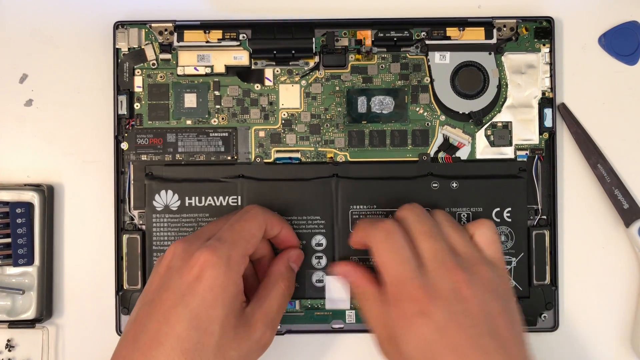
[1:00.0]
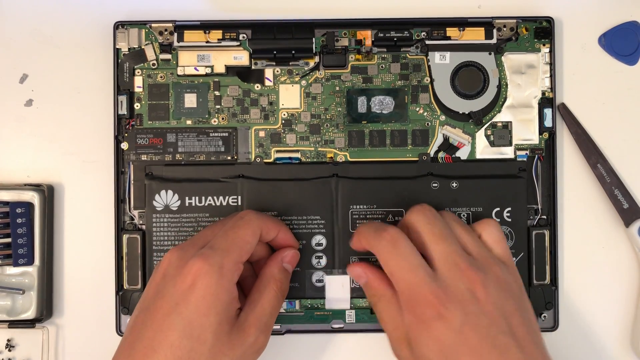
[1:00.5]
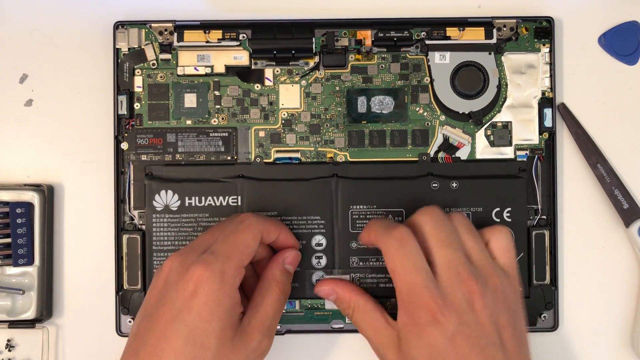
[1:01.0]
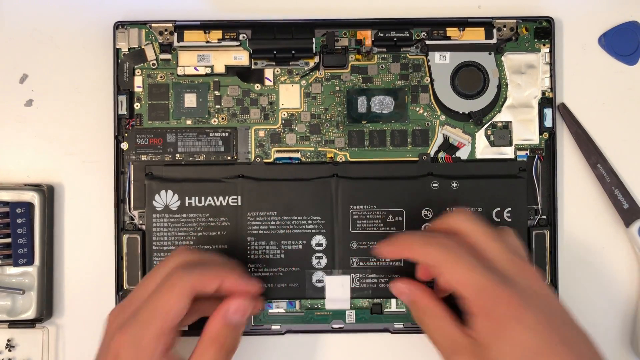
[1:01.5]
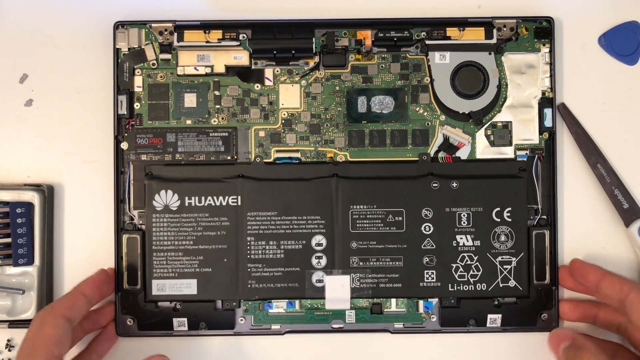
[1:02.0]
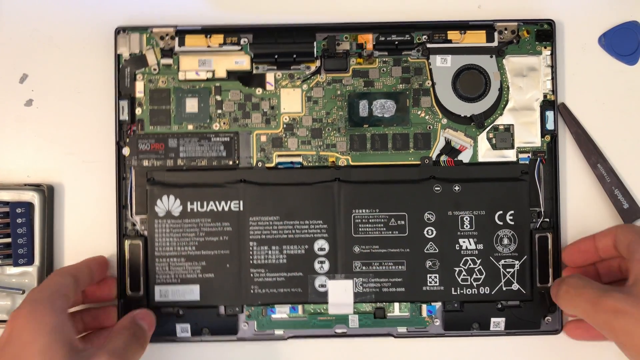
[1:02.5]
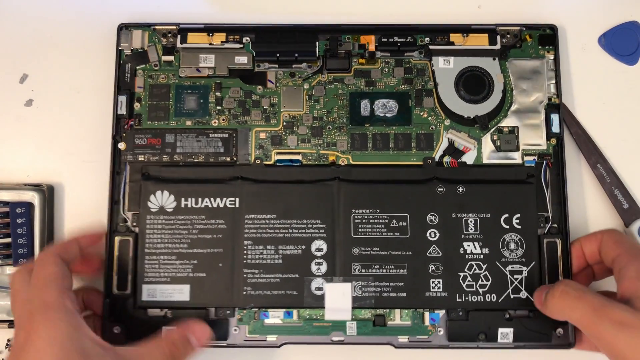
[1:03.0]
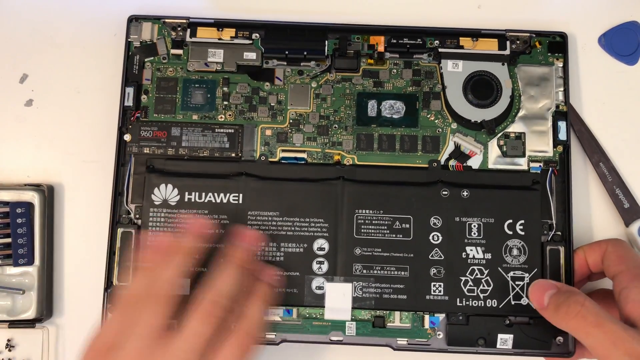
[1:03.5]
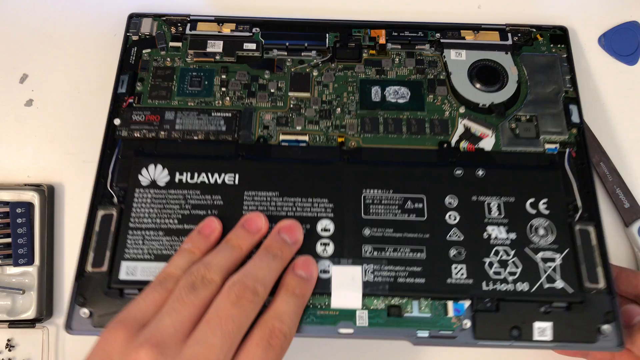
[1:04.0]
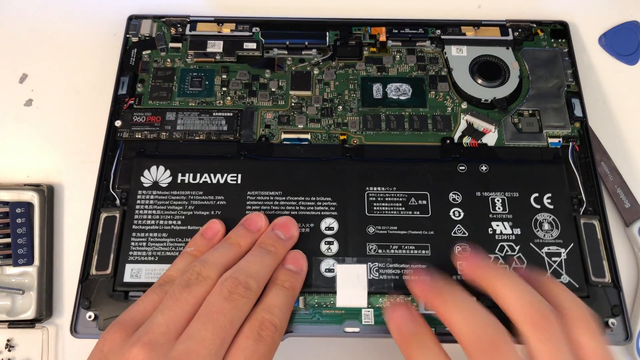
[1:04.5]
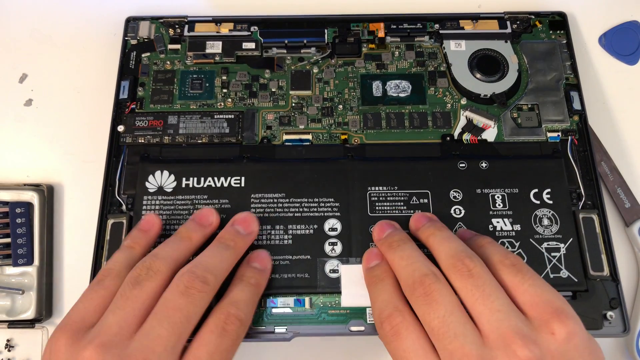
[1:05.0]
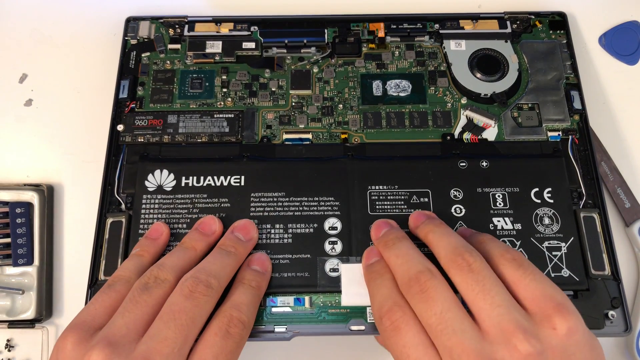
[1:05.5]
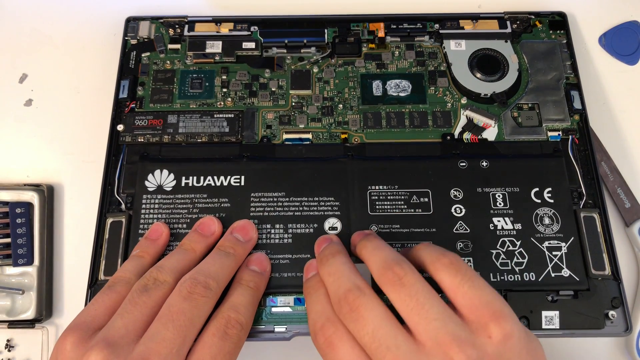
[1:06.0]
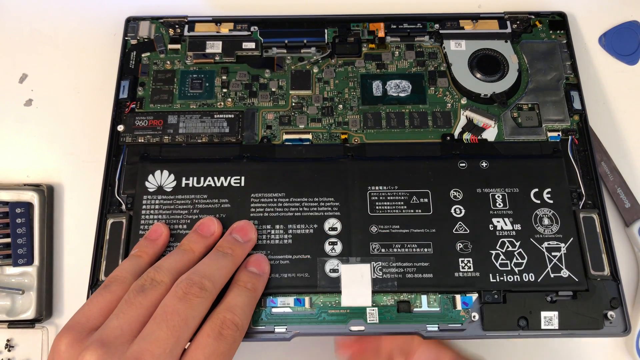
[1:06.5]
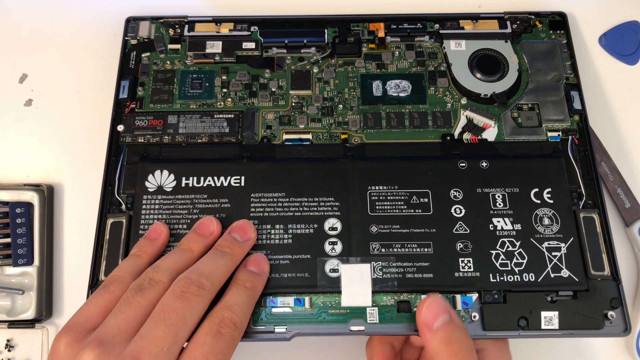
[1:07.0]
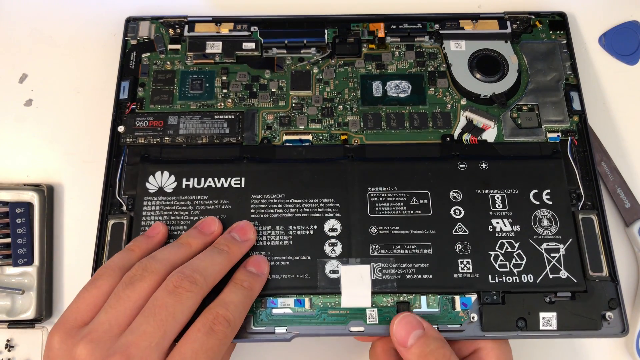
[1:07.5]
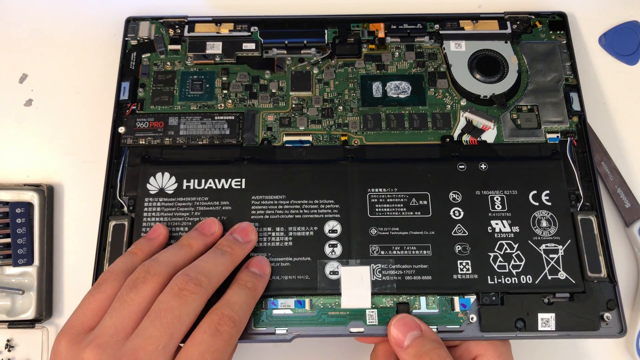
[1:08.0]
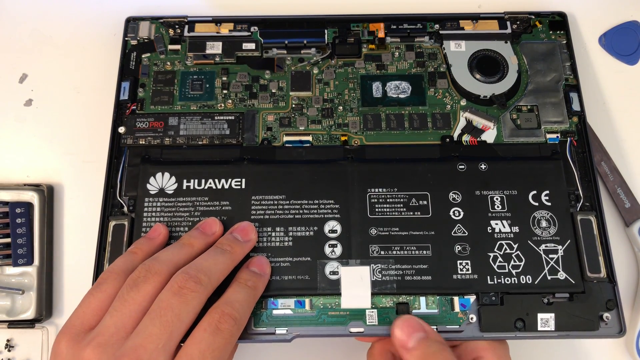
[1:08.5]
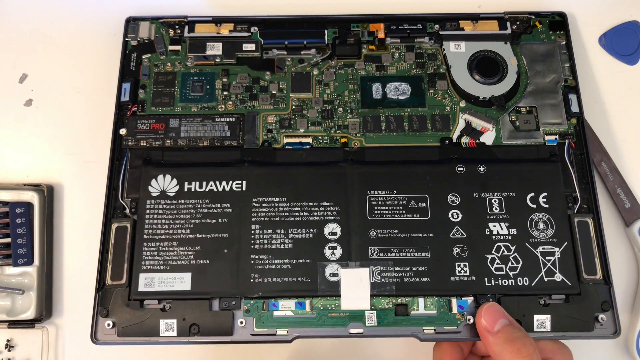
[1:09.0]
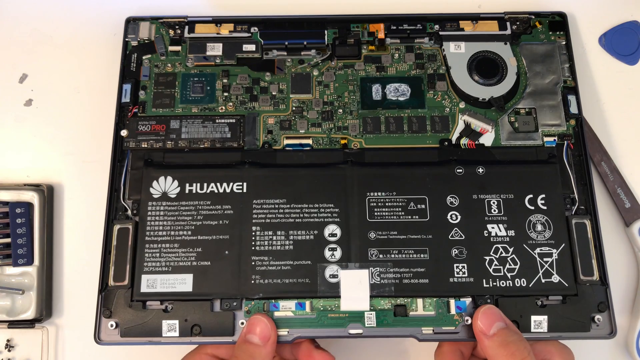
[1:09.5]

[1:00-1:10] A person handles an exposed computer that is missing its hard shell case, showing the electrical components and the battery. On the right side of the frame are a pair of scissors next to the computer and a blue triangle-shaped plastic piece. On the left side is a gray, white and blue plastic electronic device. The person grabs both sides of the computer's bottom edge toward the bottom of the frame, then places their hands over the tape to smooth it out over a white rectangular piece of paper in the middle of the laptop. They grab the outside edges of the laptop and very gently pry it open with both hands, then place their hands more toward the center of the computer screen and lift it slightly. With the right hand they press a few things toward the middle. They use their thumbs on the bottom, then flip their hands so their thumbs are on top.